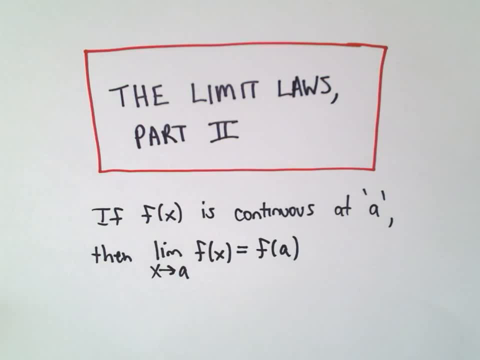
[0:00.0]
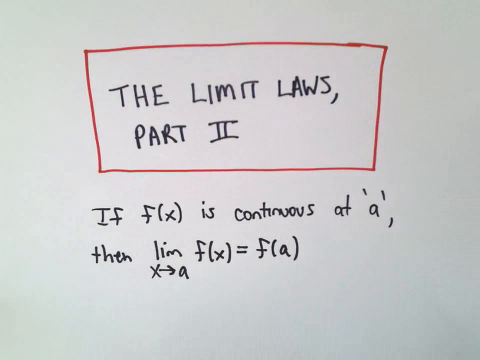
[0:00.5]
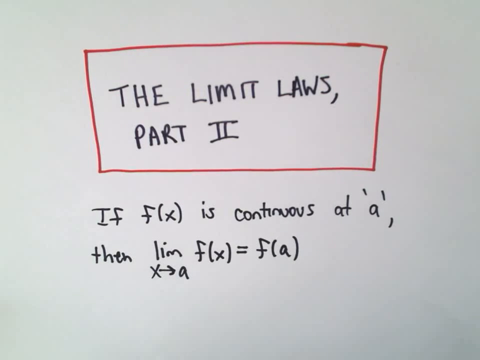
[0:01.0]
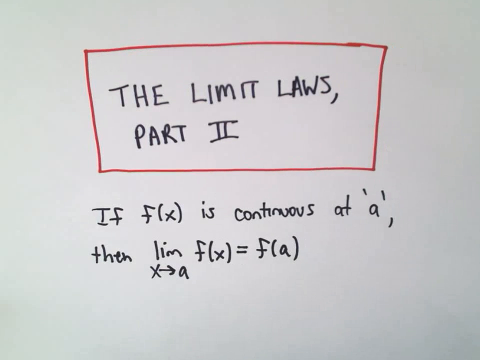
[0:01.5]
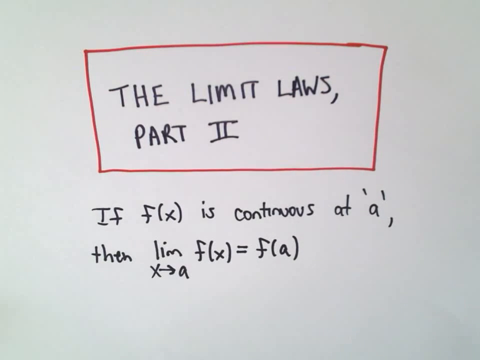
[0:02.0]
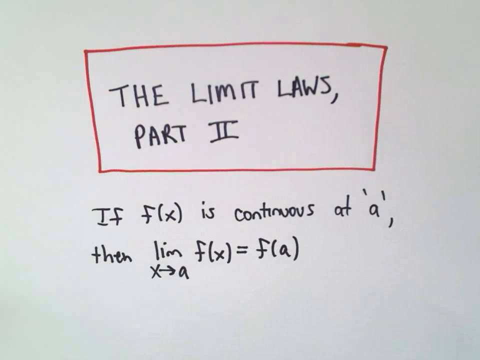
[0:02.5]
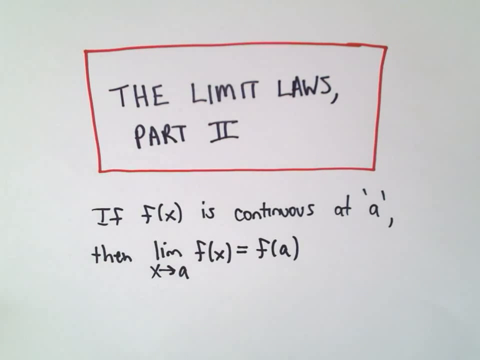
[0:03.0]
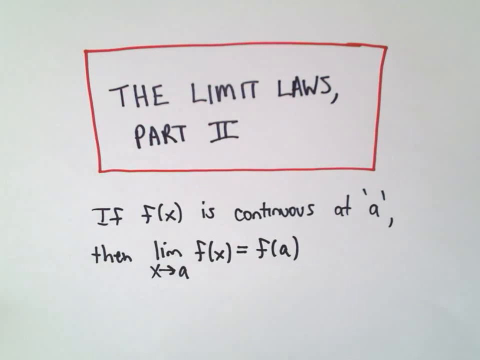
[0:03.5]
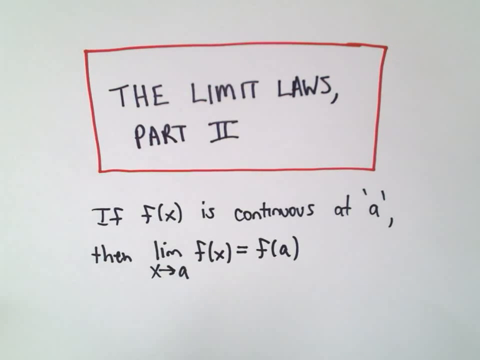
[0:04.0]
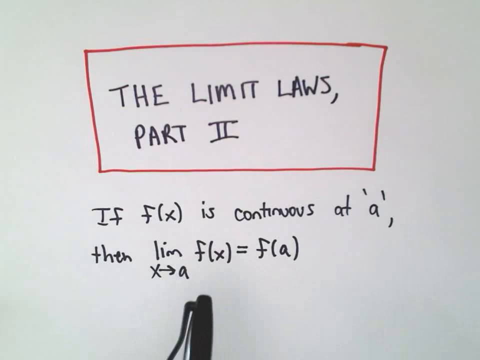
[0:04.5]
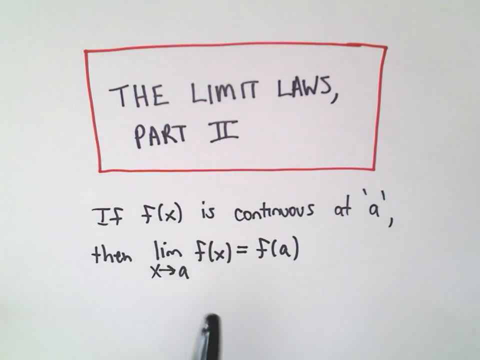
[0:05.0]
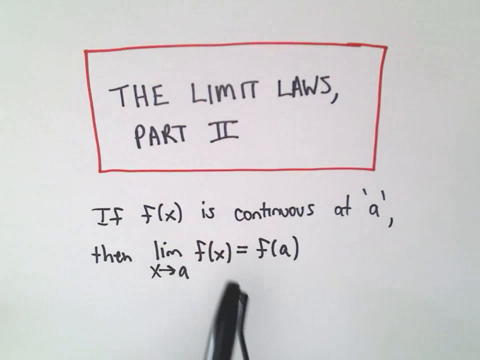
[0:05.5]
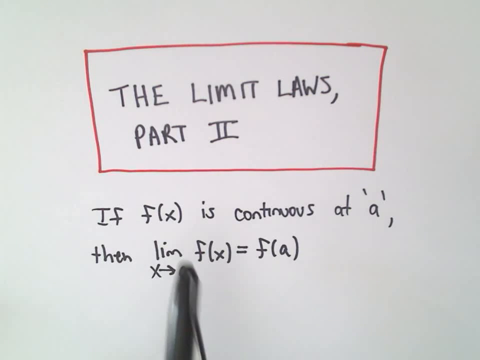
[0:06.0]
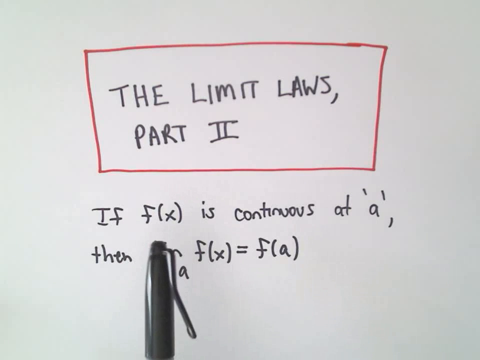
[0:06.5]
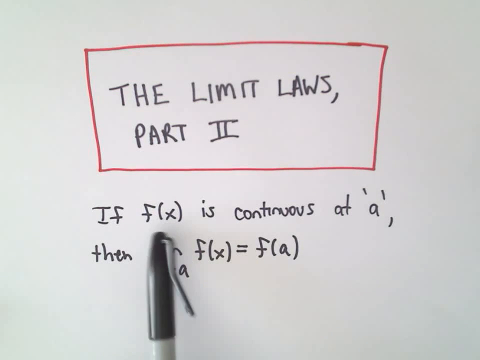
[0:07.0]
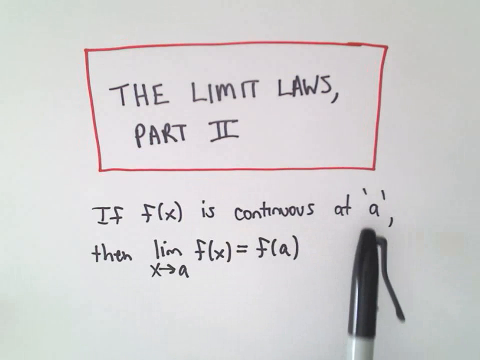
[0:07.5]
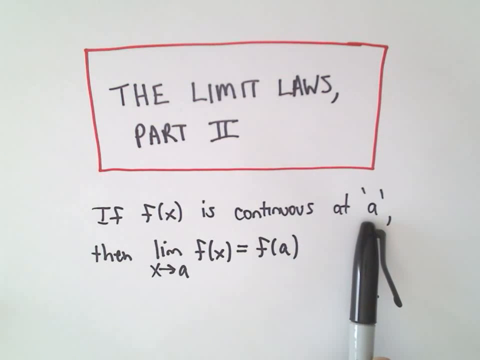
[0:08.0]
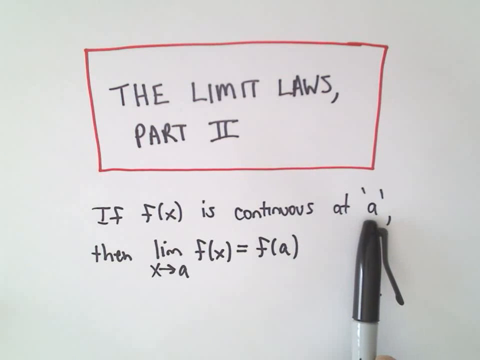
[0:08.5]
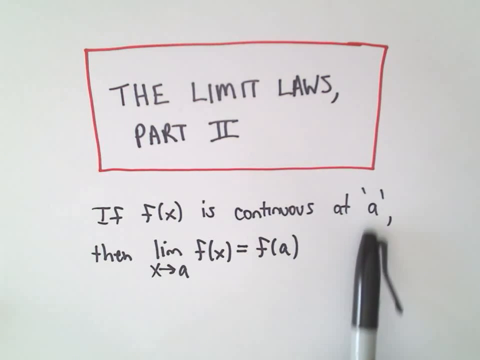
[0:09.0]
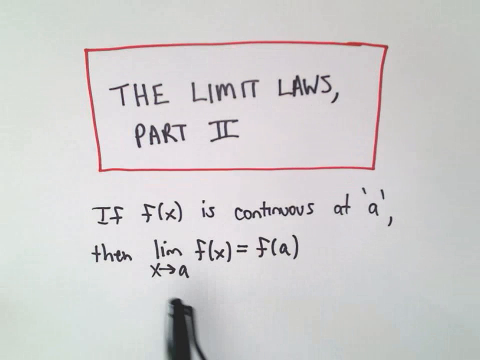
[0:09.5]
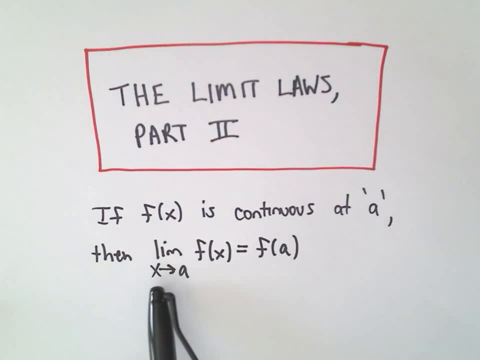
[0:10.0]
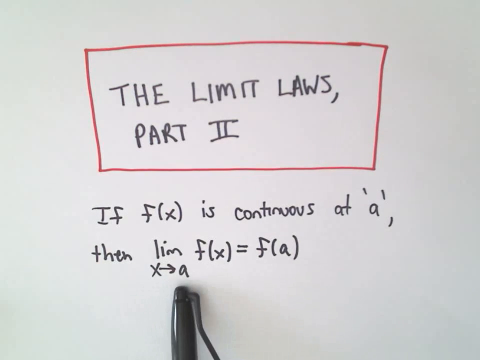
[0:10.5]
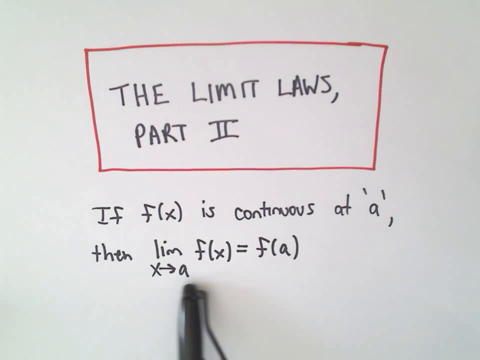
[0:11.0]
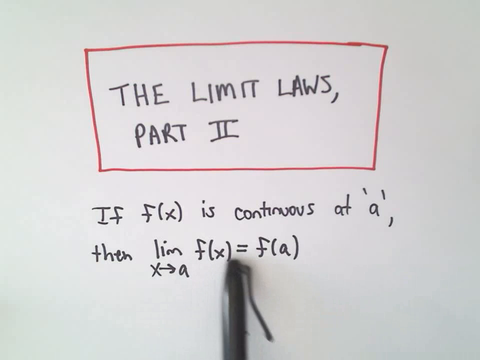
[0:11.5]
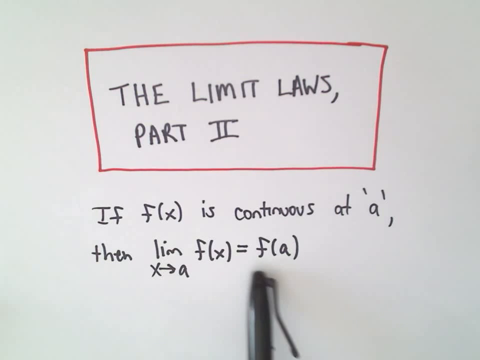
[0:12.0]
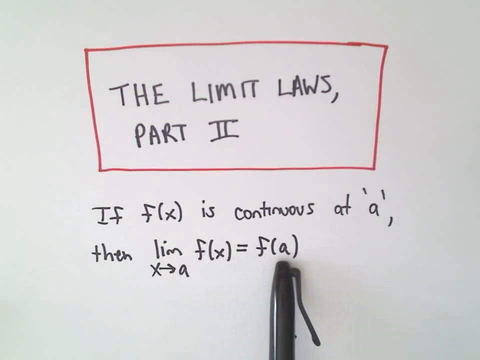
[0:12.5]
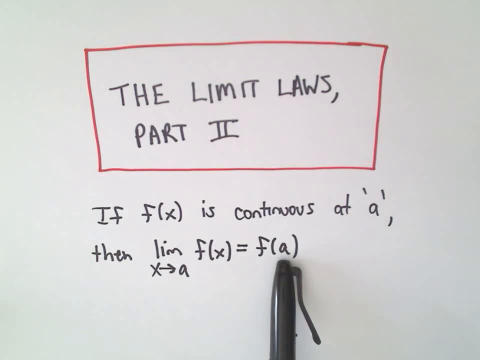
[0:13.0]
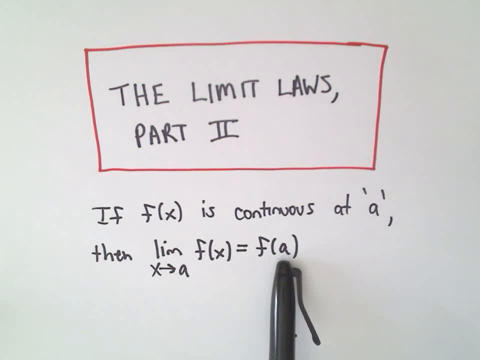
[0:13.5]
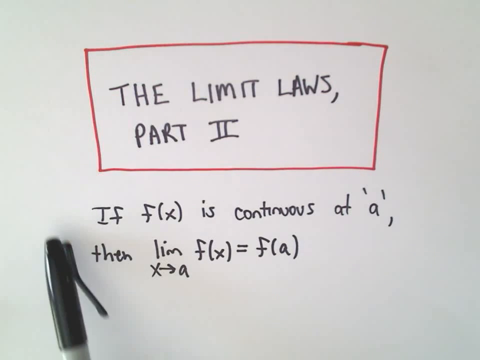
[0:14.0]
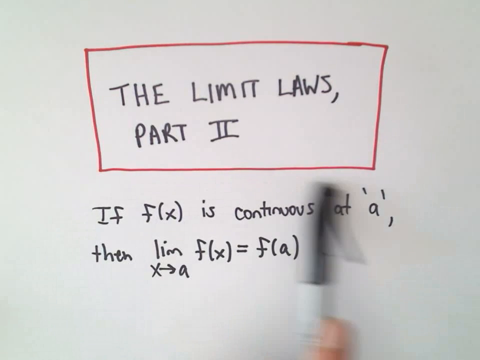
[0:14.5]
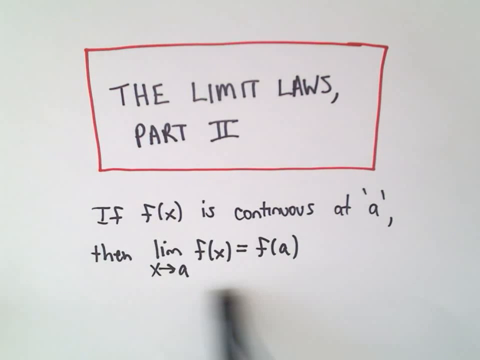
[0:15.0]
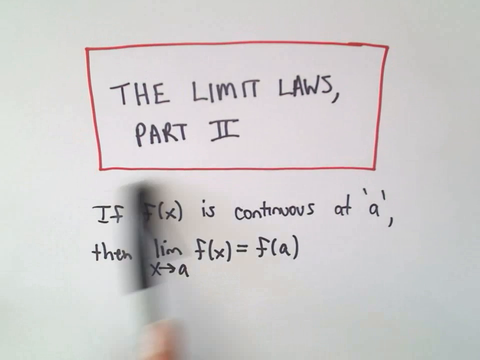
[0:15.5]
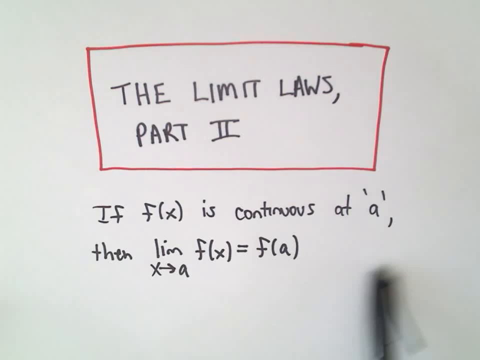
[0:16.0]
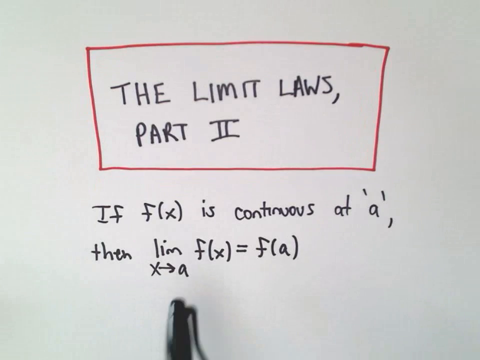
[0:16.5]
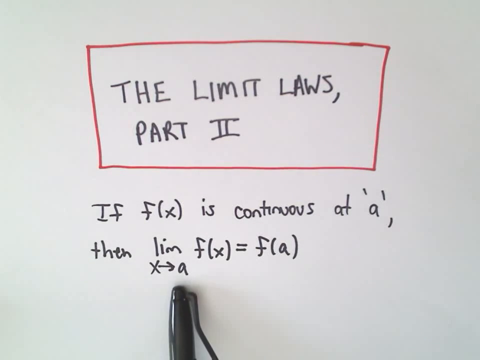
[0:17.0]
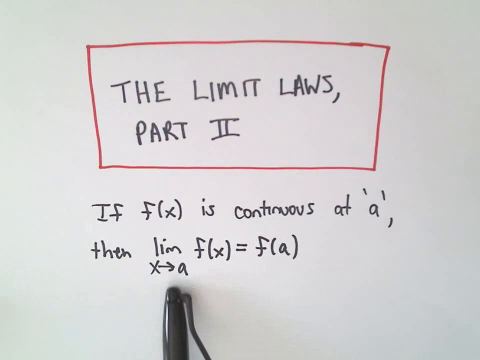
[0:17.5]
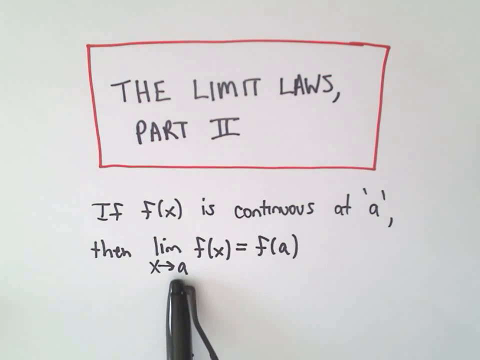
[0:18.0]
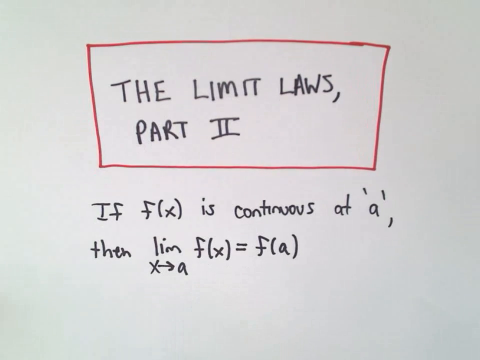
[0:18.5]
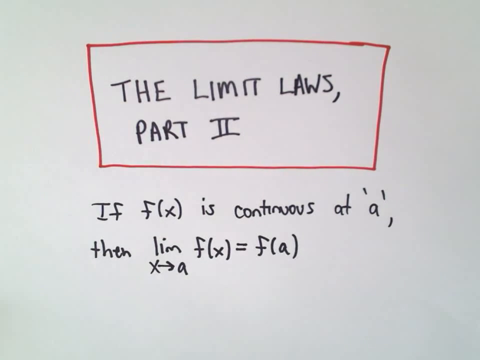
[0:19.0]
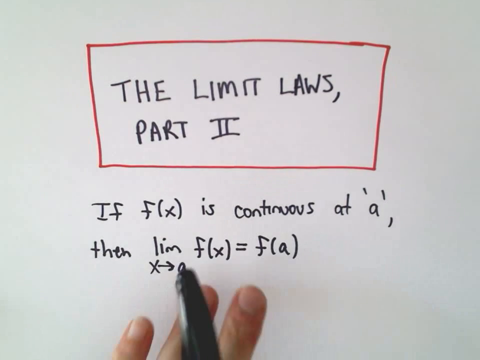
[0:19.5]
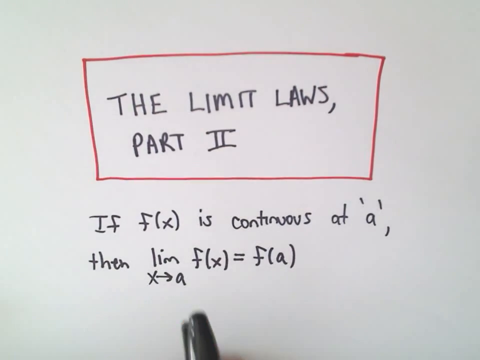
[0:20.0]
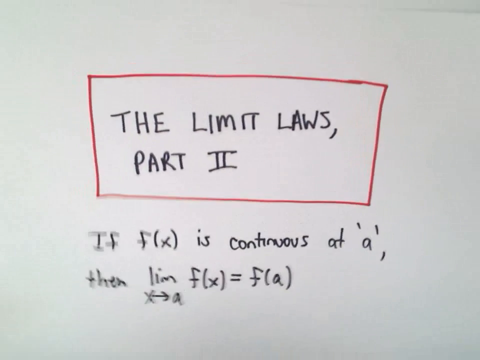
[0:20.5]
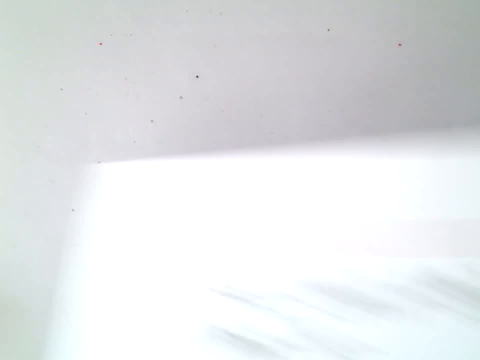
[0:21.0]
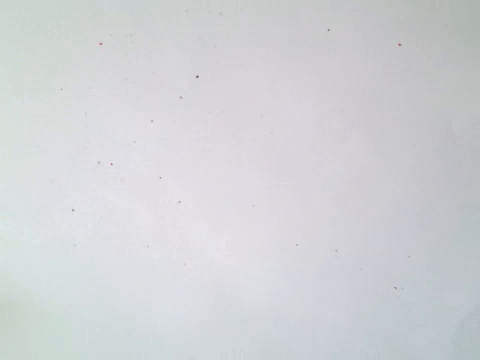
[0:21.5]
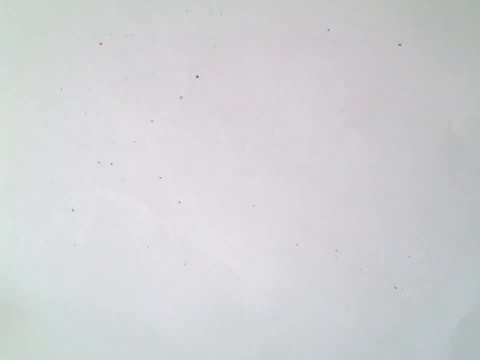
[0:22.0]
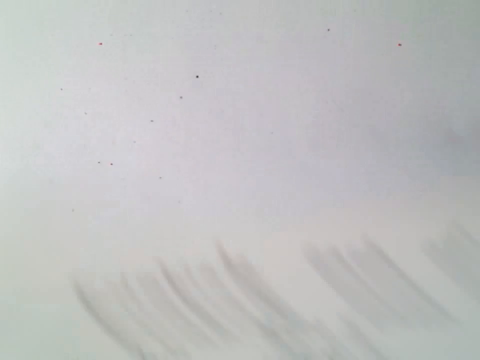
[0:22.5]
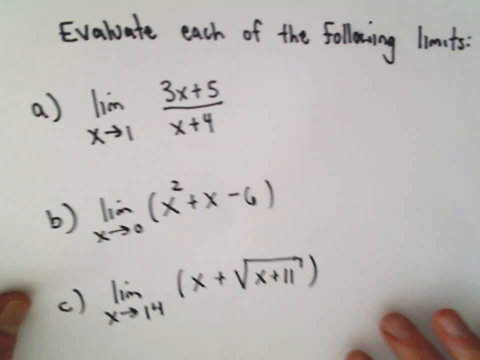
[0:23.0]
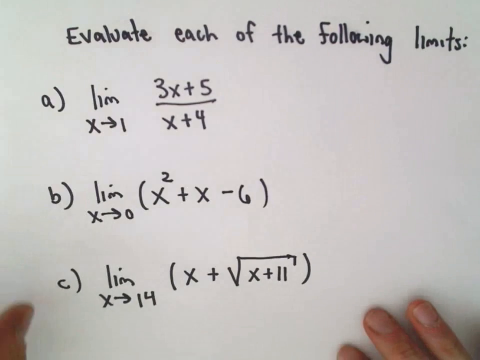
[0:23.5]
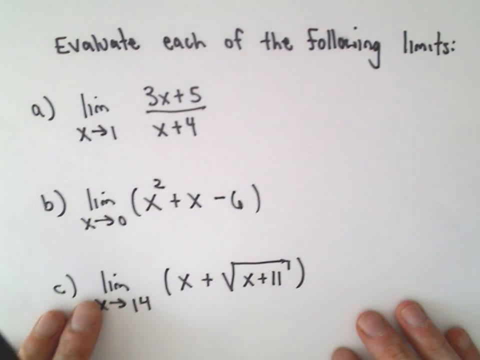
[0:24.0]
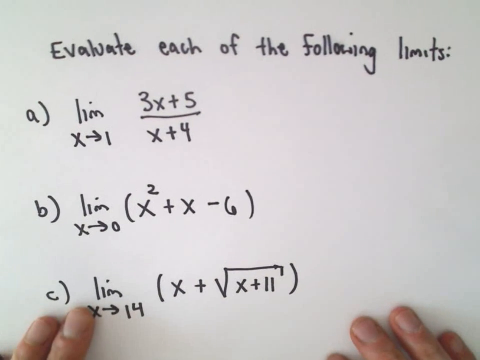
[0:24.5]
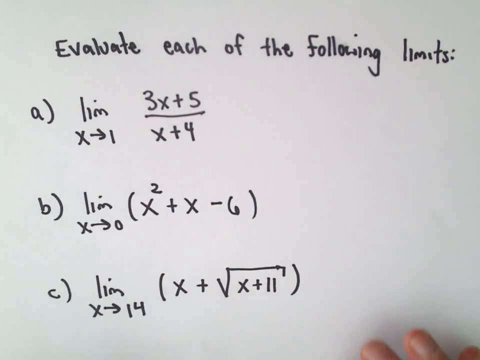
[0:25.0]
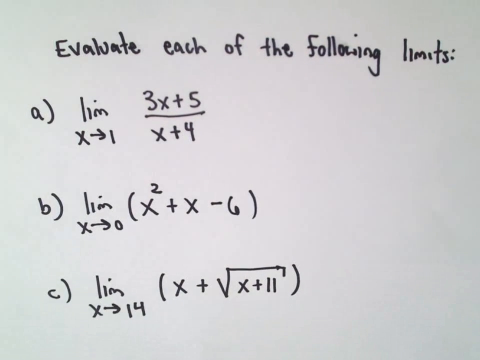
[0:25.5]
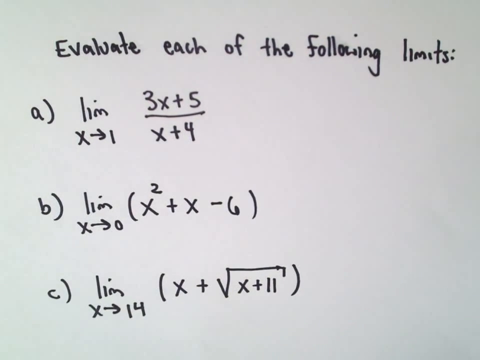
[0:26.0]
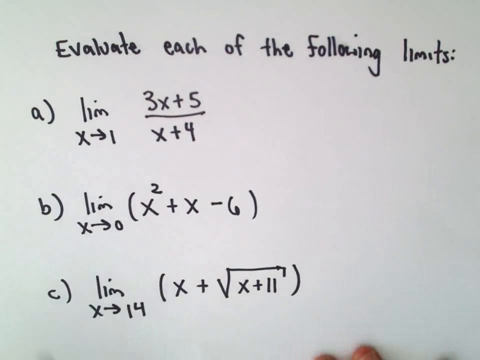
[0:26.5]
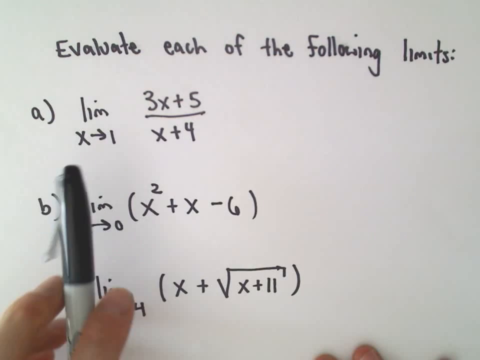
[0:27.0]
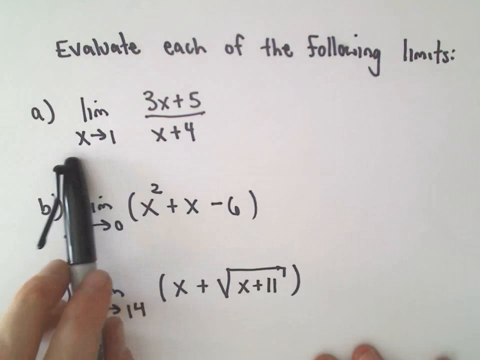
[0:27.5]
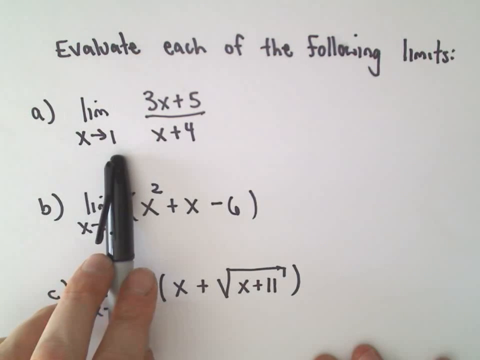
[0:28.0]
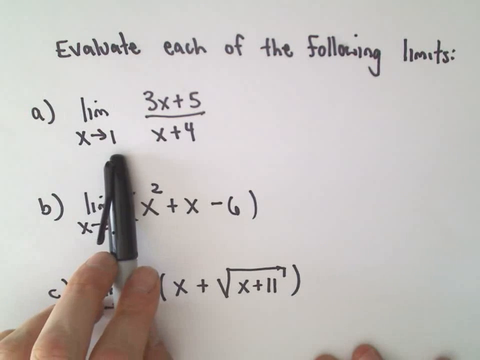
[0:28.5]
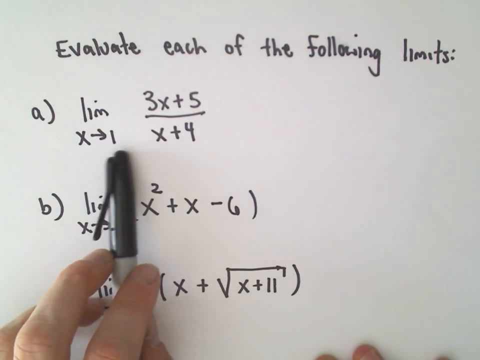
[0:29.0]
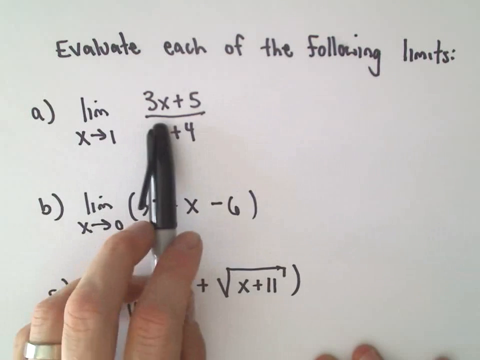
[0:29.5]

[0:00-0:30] A white sheet of paper has writing in sharpie in the middle that says "the limit laws, part two," with a red box drawn around it. Below that, the paper states that if f of x is continuous at a, then the limit of f of x as x approaches a equals f of a. After a few seconds, a black sharpie appears and follows along with what is written on the paper. Two hands then appear and swap the paper for a new sheet with more equations pre-written in sharpie. The new sheet reads "evaluate each of the following limits" and lists three examples, a, b and c. The sharpie dots the different examples as if pointing them out, presumably while teaching.